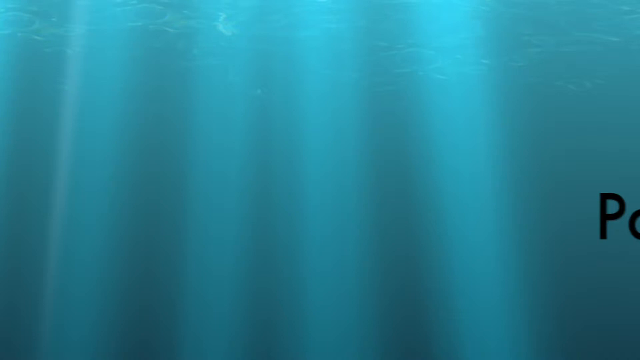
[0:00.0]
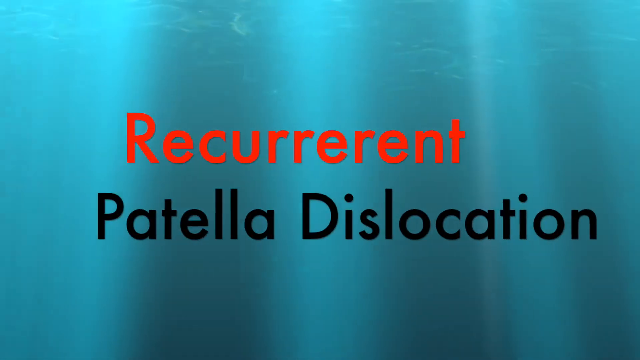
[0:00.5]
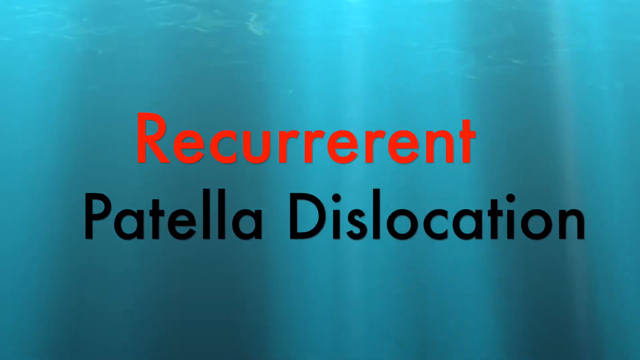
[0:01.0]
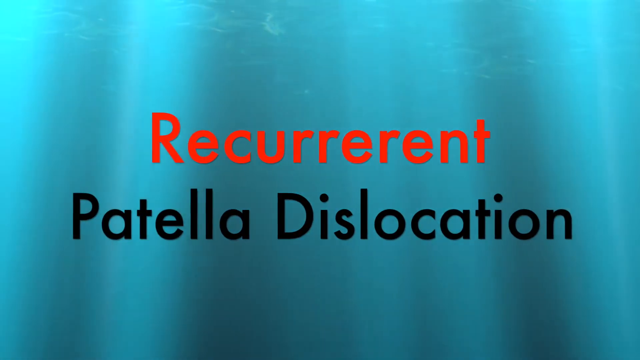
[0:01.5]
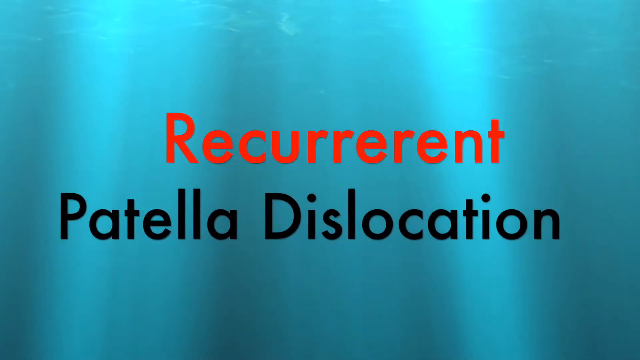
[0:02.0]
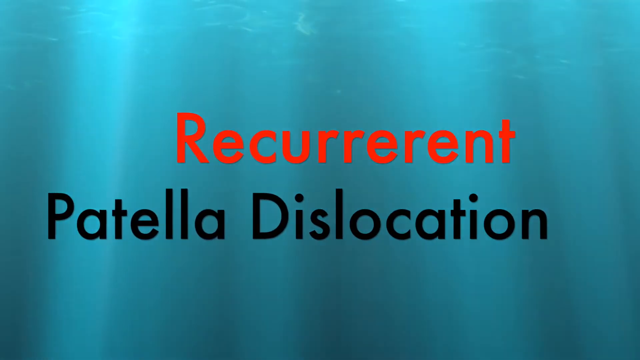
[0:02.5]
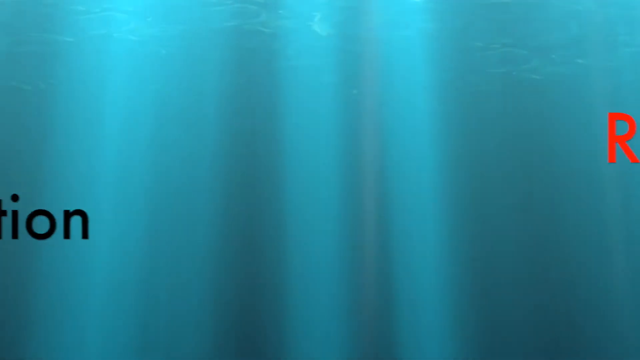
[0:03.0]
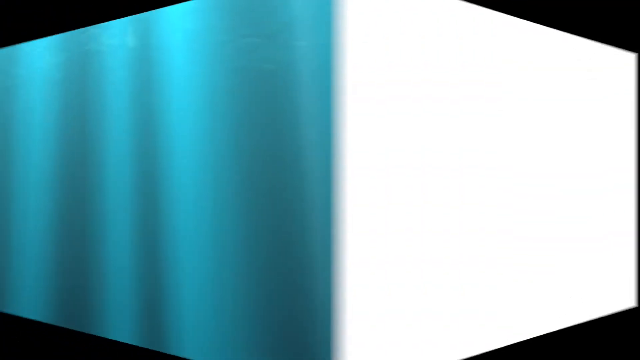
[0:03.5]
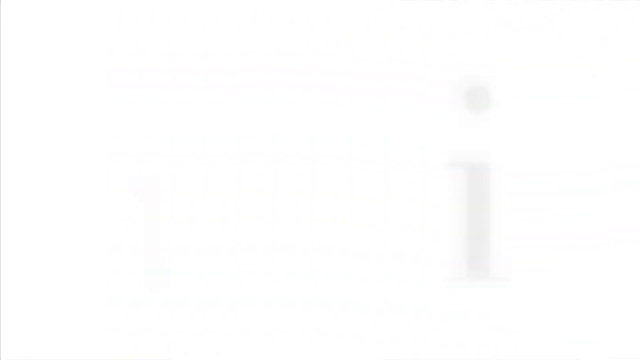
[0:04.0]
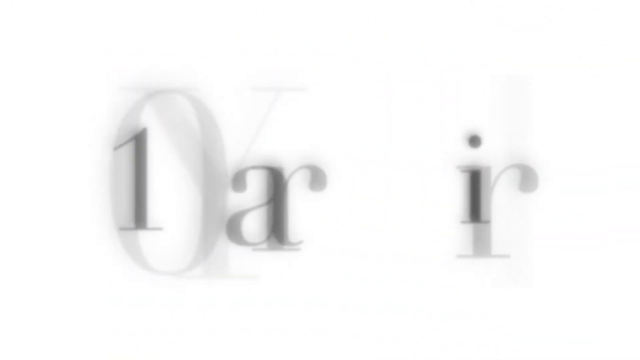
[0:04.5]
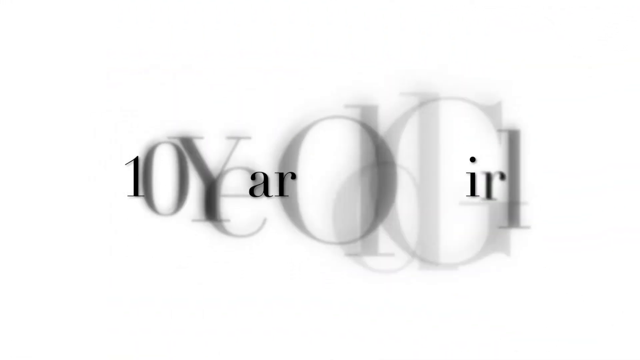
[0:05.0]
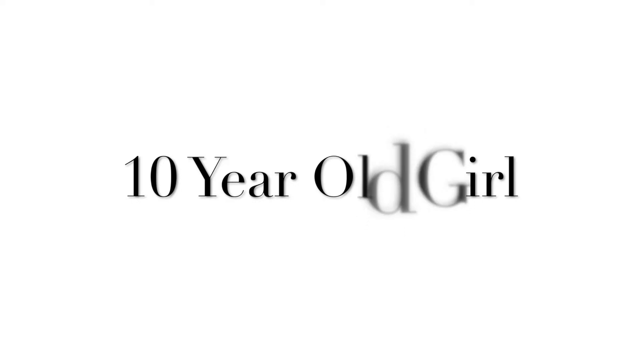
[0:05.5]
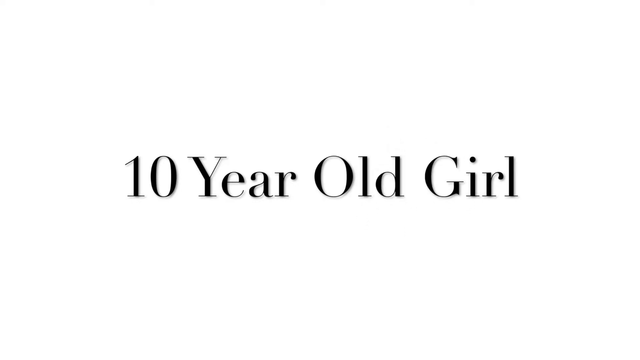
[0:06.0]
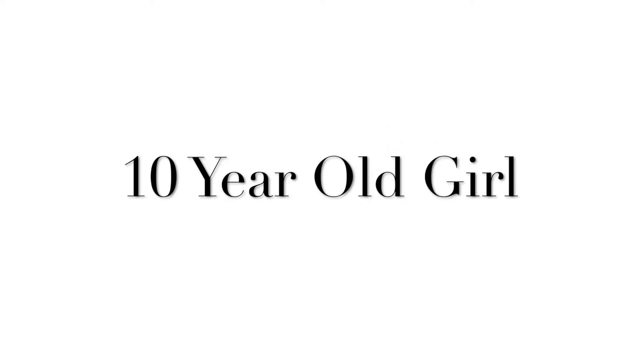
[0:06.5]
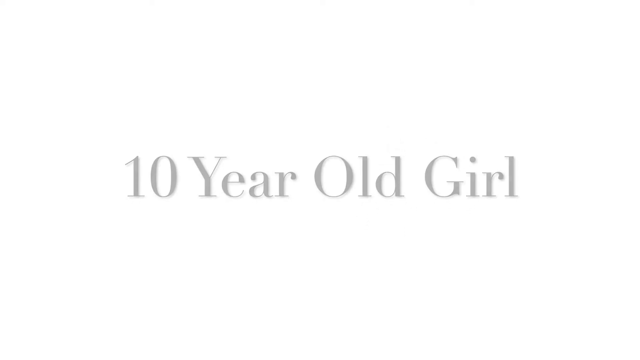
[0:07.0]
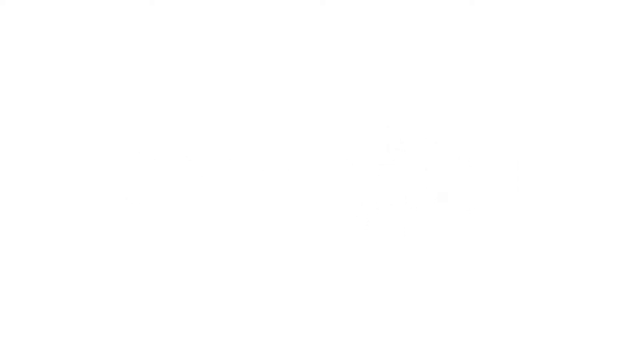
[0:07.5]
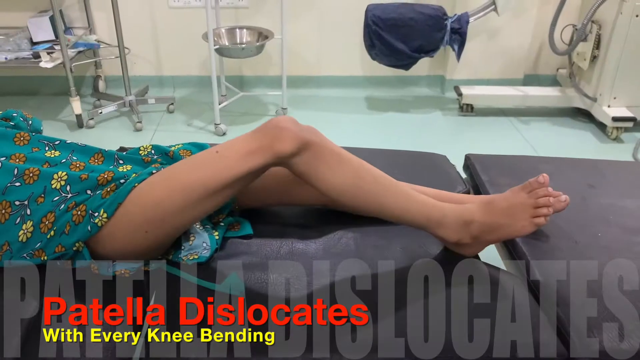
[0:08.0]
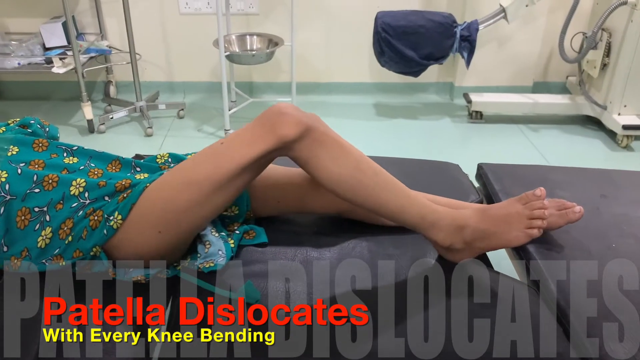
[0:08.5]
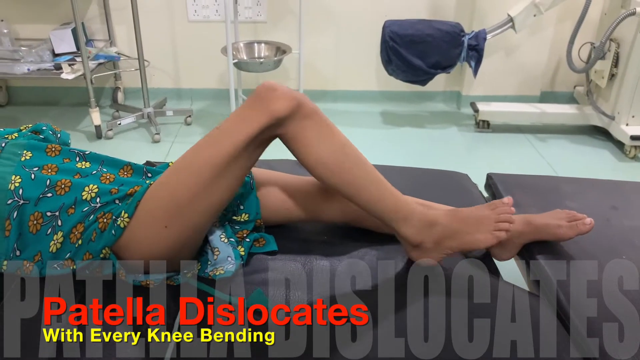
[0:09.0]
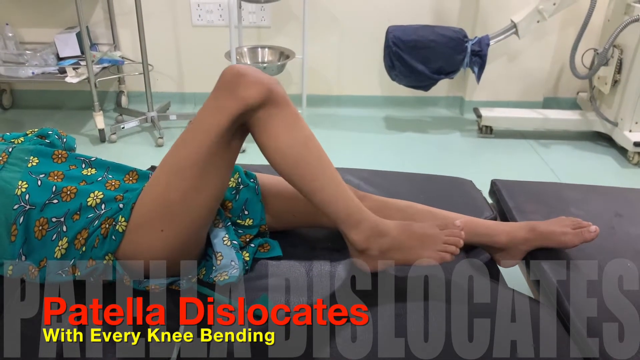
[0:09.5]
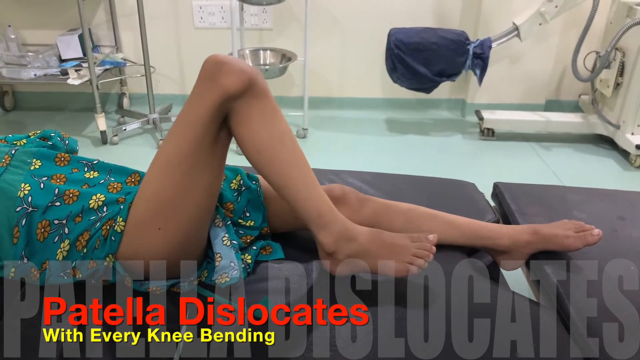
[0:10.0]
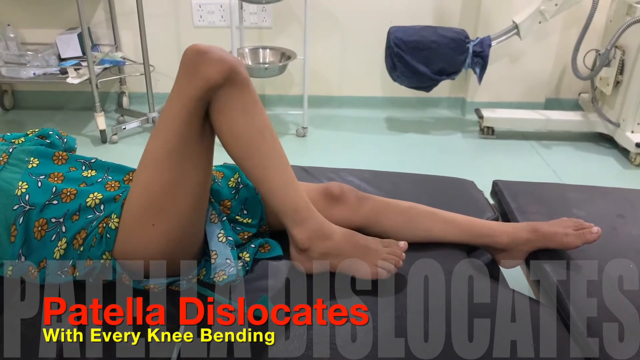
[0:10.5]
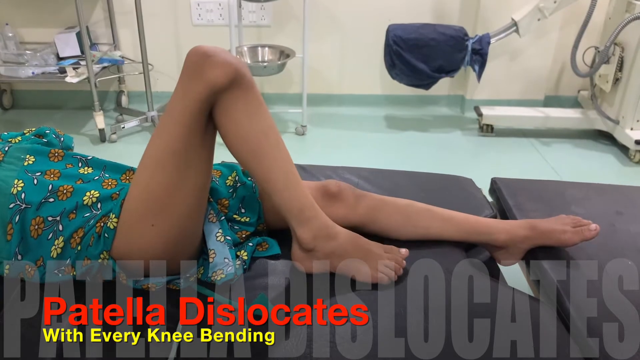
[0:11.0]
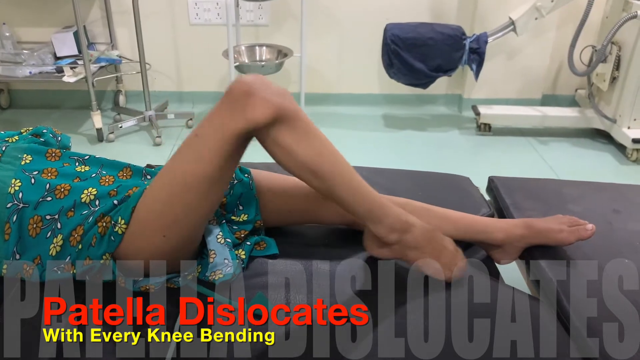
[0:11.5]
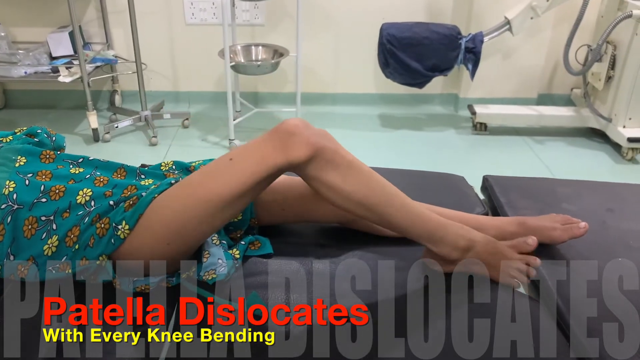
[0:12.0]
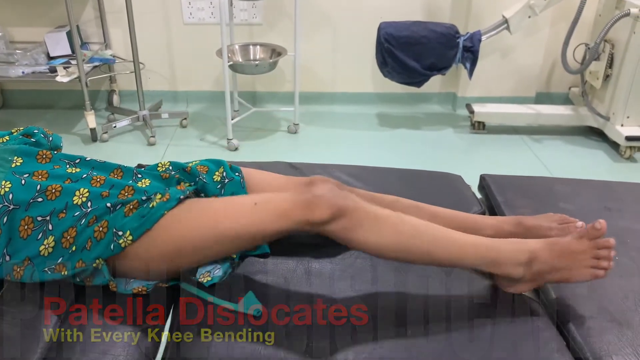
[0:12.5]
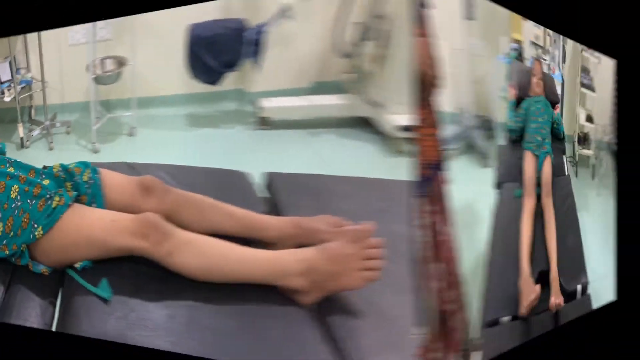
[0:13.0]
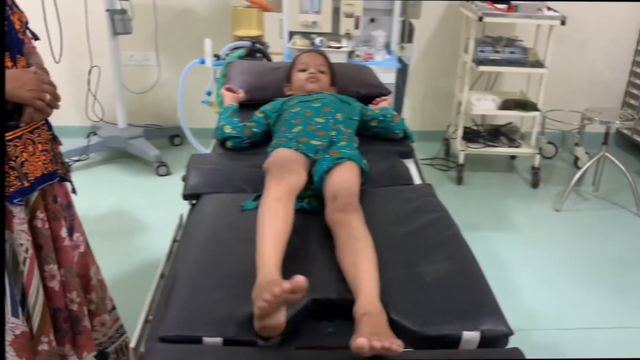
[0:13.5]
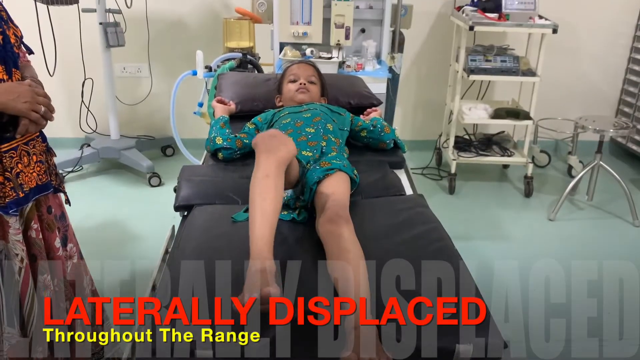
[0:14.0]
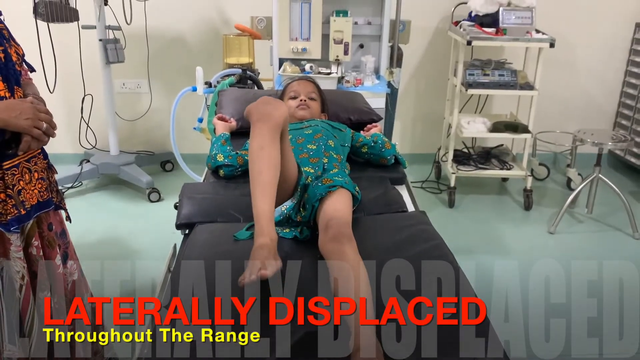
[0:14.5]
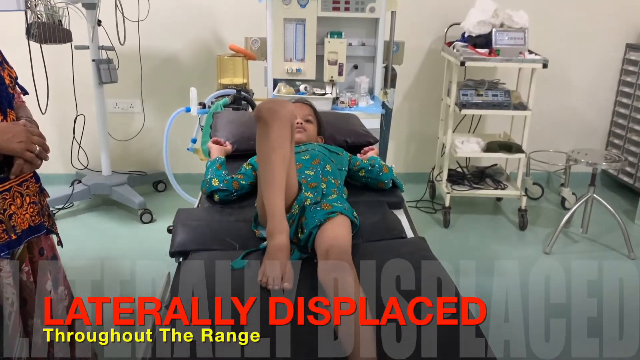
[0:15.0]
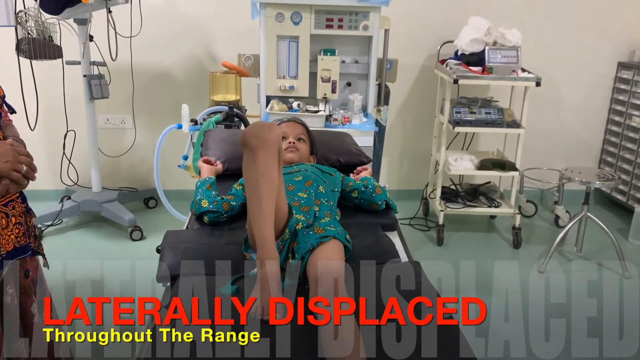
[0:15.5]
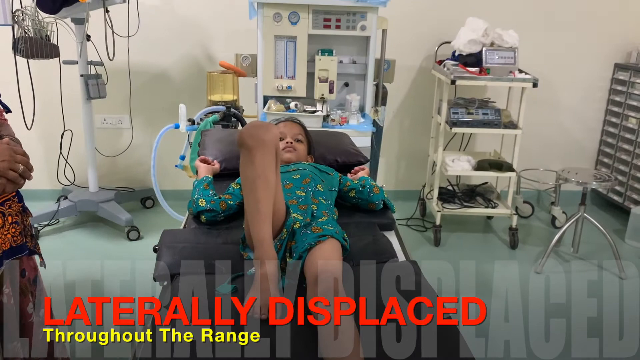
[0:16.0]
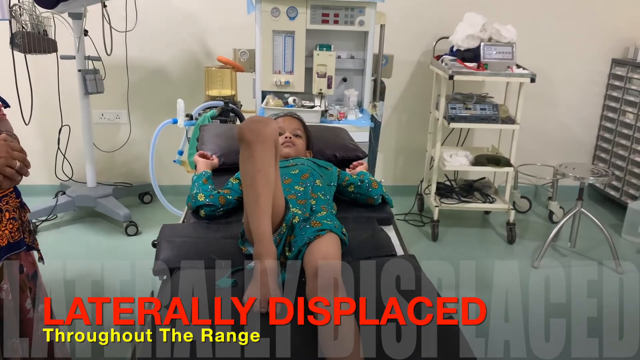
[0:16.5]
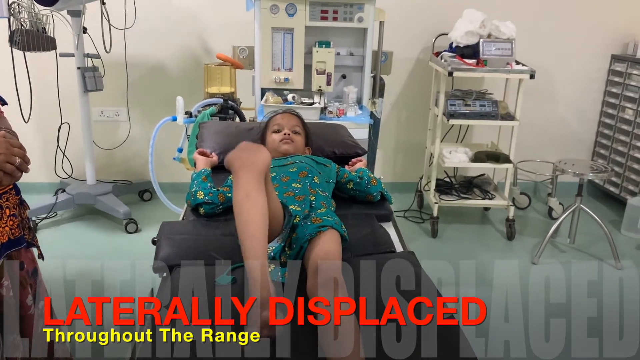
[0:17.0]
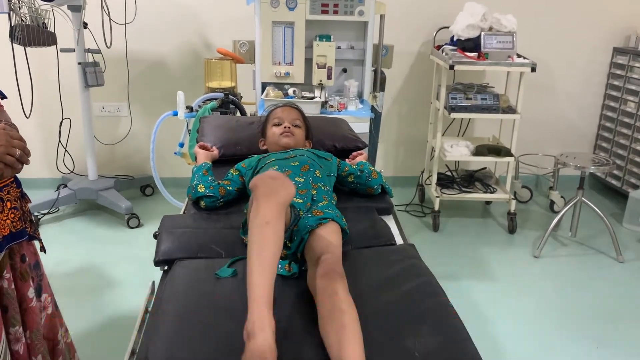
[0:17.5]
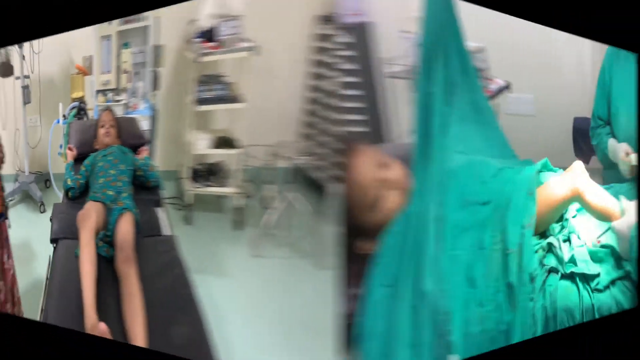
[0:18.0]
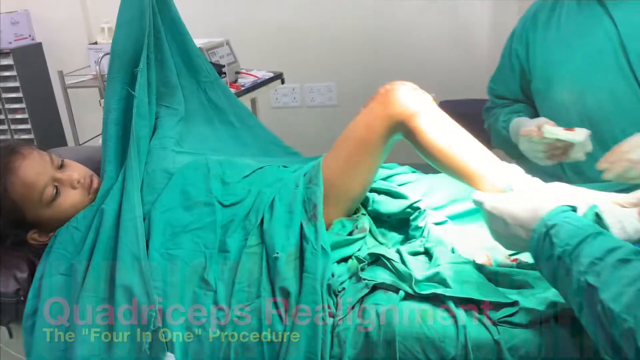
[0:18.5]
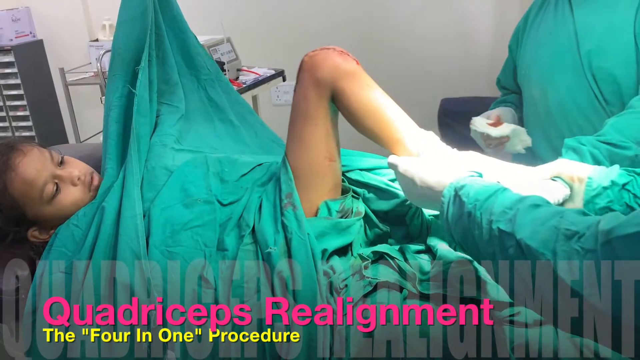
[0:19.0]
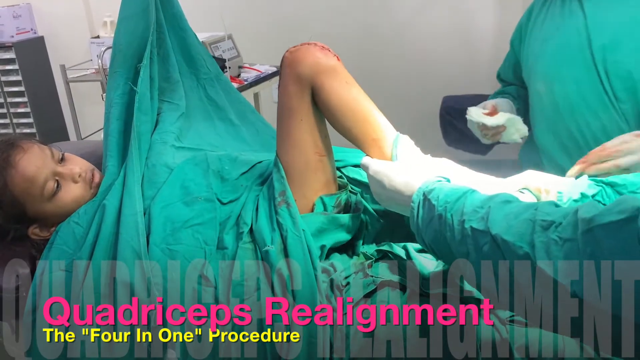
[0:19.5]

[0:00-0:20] The video shows recurrent patella dislocation. A white screen displays black letters reading "10-year-old girl". A shot shows the girl's bare legs as she attempts to bend her leg. She is lying on a black table in a medical room, wearing a patient gown with an aqua background and dark yellow and yellow flowers with white stems. She draws her near leg on the table towards the top, and the patella dislocates as she bends her knee, pointing to the side. A front shot shows the girl doing the same thing, revealing the laterally displaced movement of the knee throughout the range. Her mother appears to be standing by the girl in a colourful outfit. The girl bends her knee as far as she can and then places her leg down again. A third shot shows the girl in surgery; she appears to be awake. A pink heading reads "quadriceps realignment, the four-in-one procedure", and the surgery has been completed. An incision is visible on the top of her knee as the surgeon bends her leg.